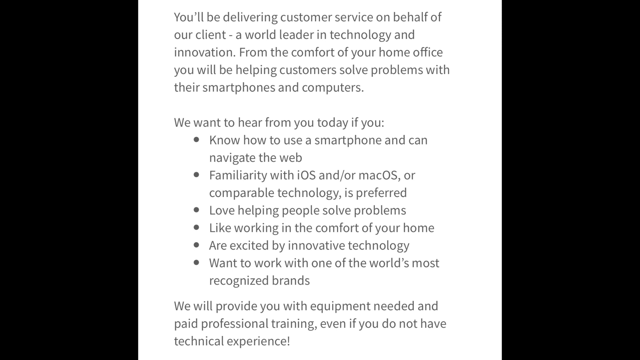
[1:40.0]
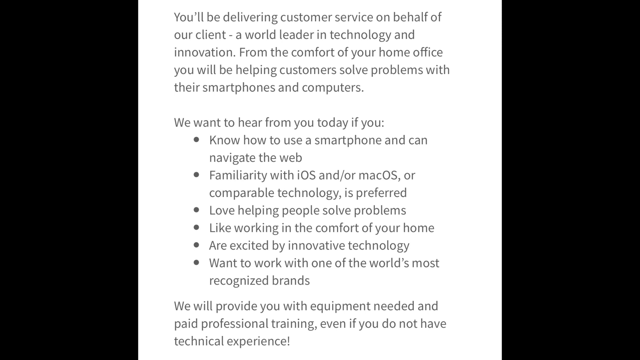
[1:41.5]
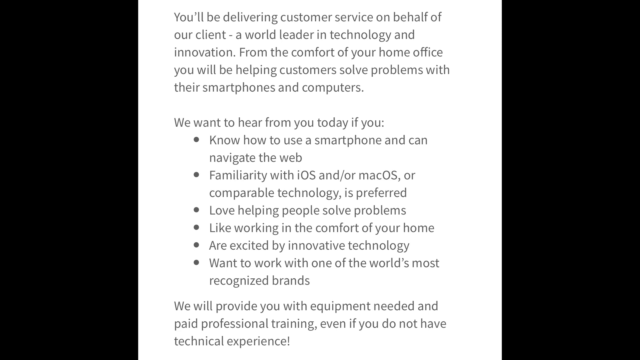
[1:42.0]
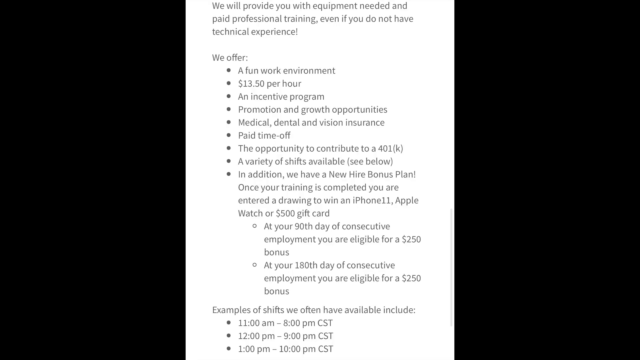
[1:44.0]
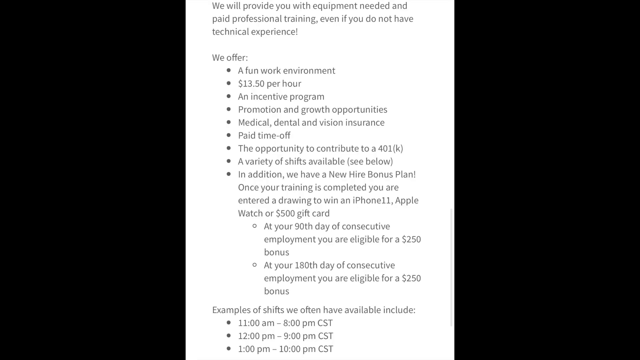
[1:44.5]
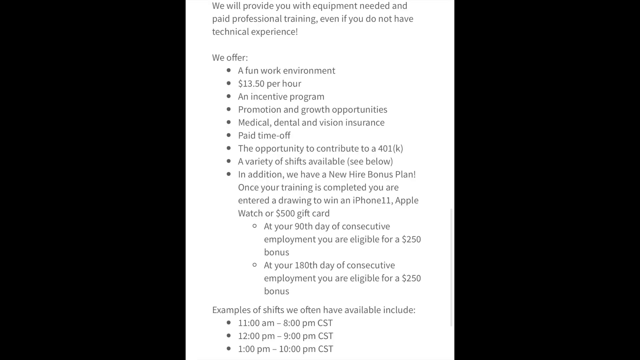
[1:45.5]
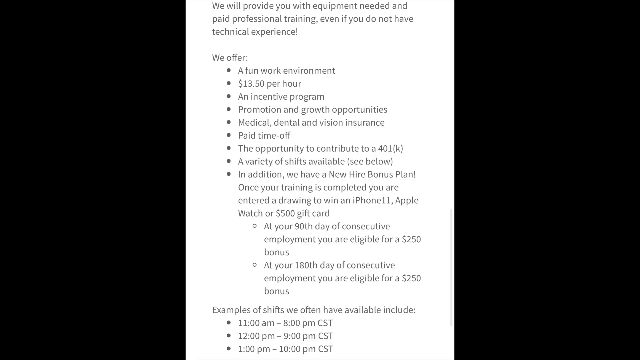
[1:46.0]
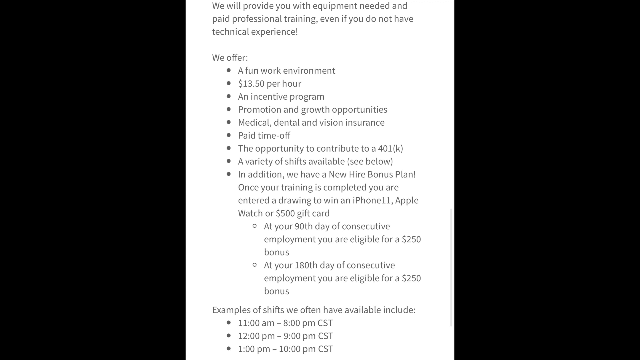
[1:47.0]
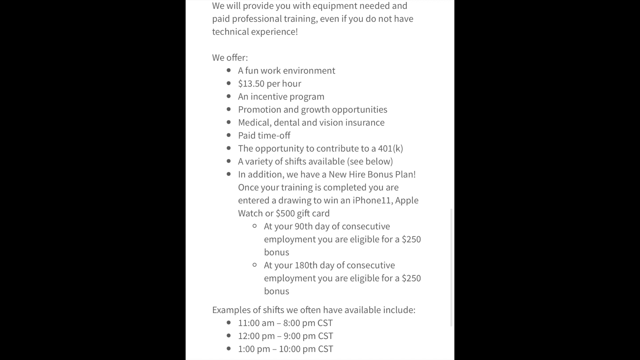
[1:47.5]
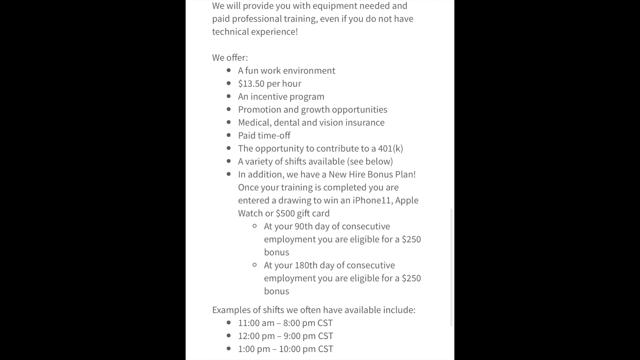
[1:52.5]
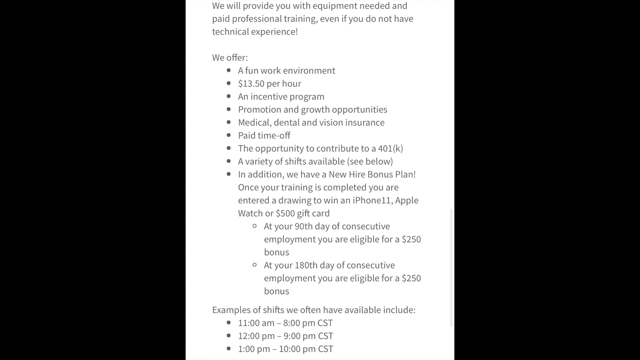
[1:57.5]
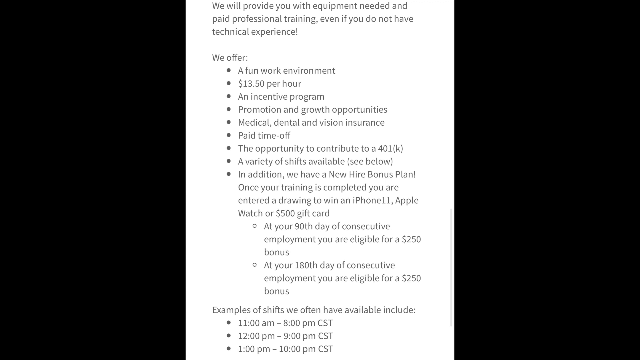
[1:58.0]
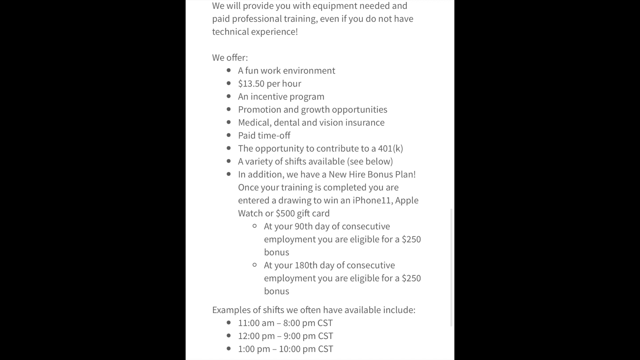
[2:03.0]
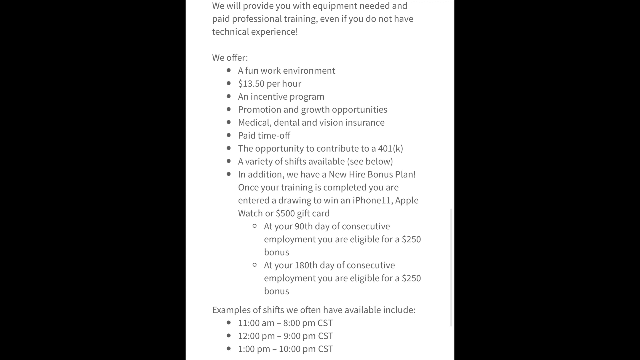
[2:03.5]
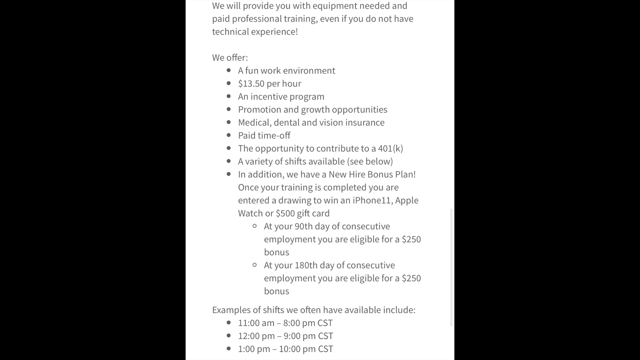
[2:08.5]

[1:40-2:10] Descriptive words at the start read "lovely nation, work from home, jobs, and more." Next, someone types on an Apple desktop computer; their hands are shown, with one hand on the computer mouse. A lady then appears in a black weave and a maroon dress, looking beautiful, seated on a comfortable sofa in what appears to be a home setting, evident from the sofa, chairs, tables and paintings on the wall. As she talks, links to Facebook and Instagram appear at the bottom. Information about pay and offers also appears: the work environment is your home, the pay is $13.5 per hour, and medical, dental and vision insurance is offered, all paid by them.